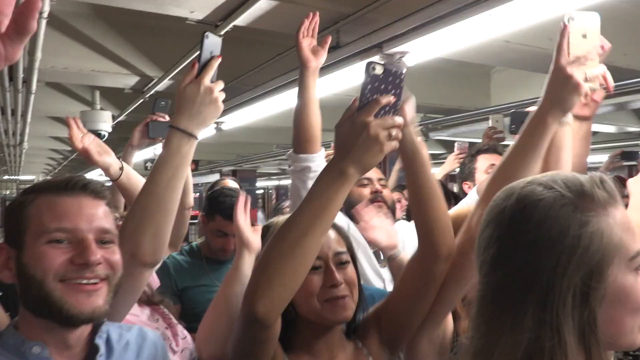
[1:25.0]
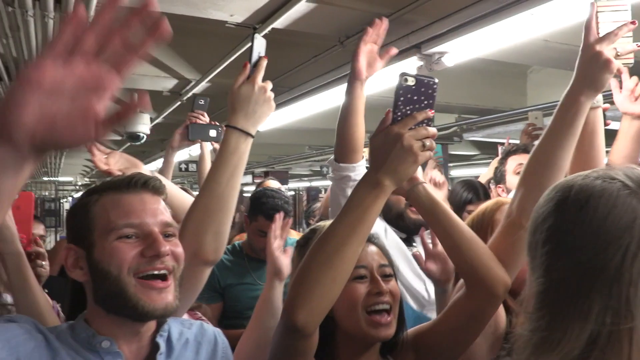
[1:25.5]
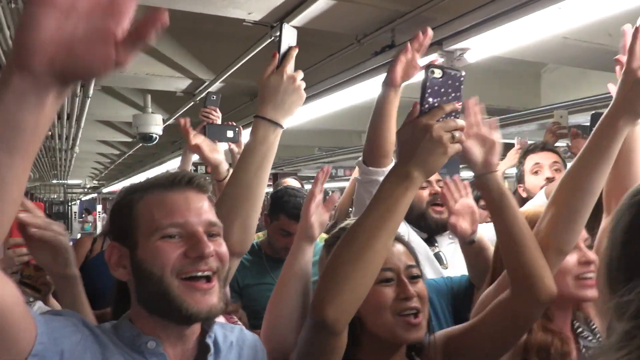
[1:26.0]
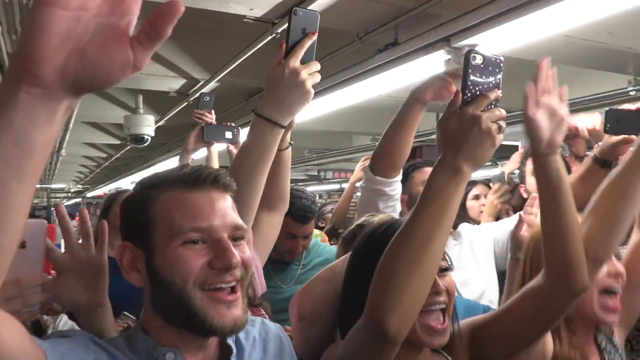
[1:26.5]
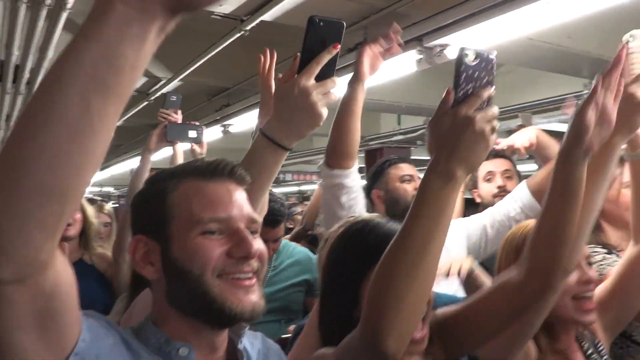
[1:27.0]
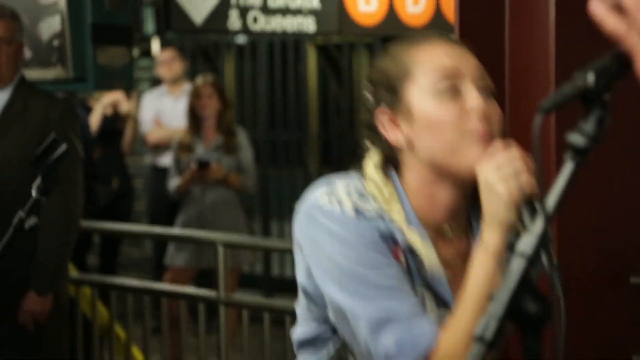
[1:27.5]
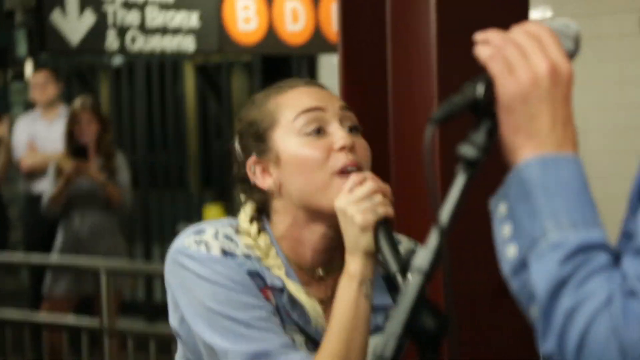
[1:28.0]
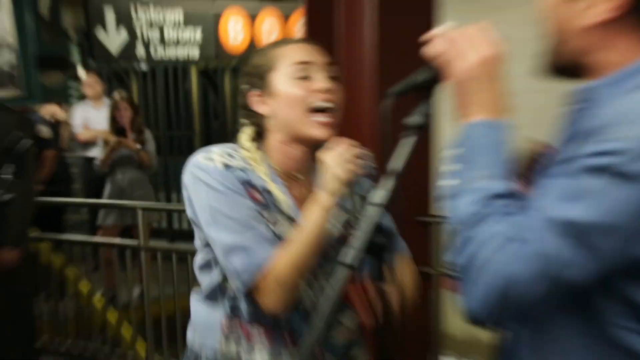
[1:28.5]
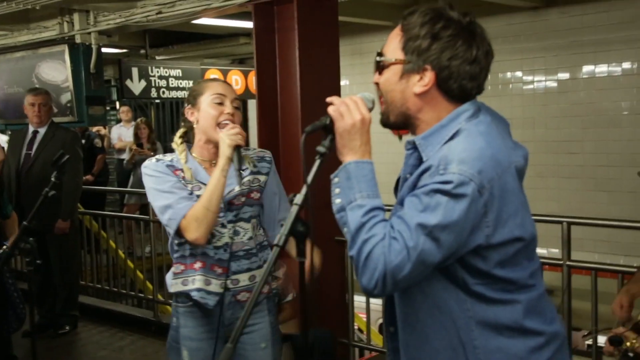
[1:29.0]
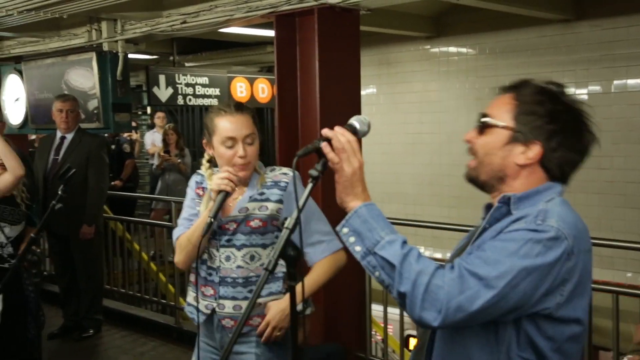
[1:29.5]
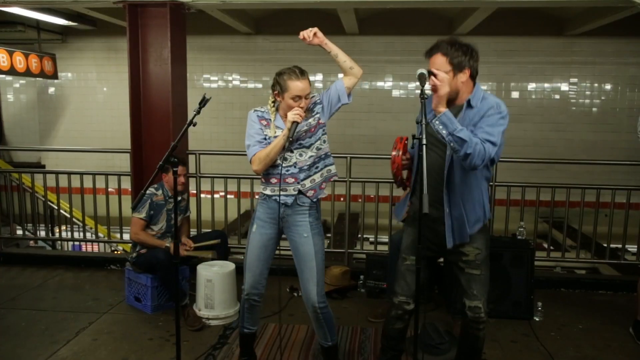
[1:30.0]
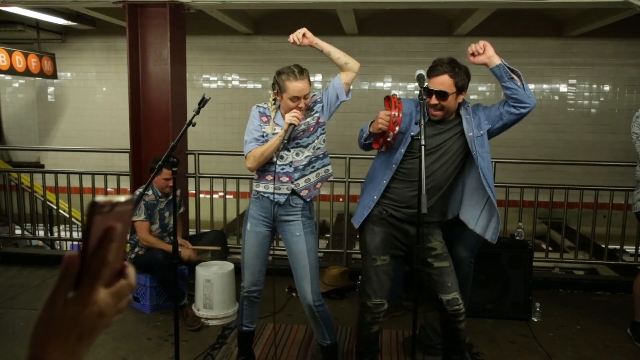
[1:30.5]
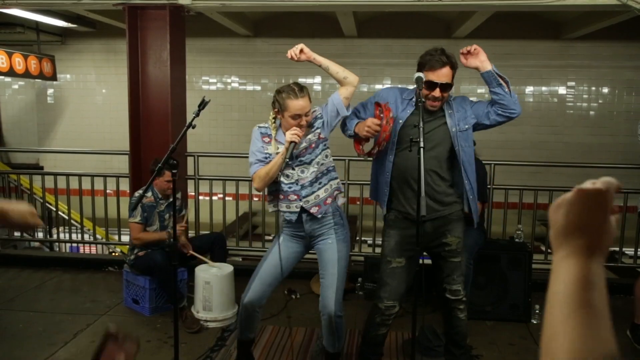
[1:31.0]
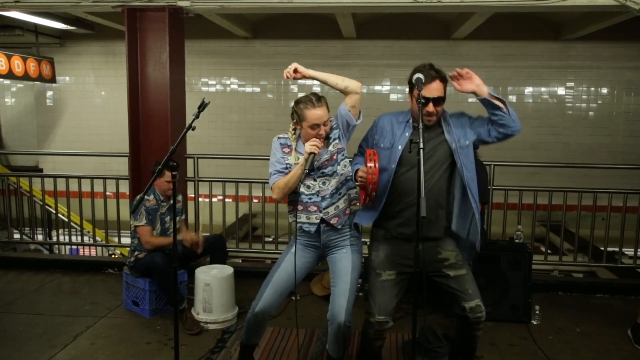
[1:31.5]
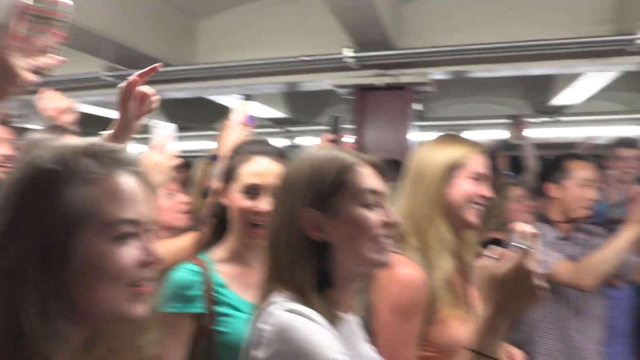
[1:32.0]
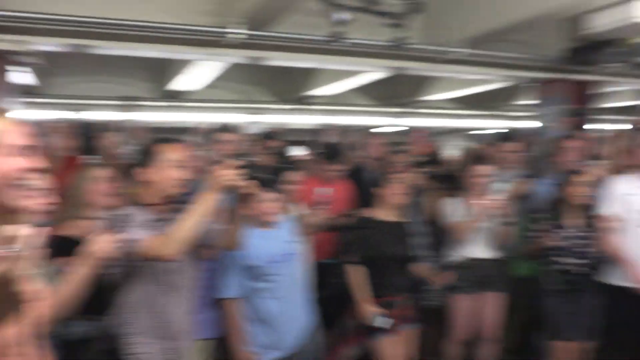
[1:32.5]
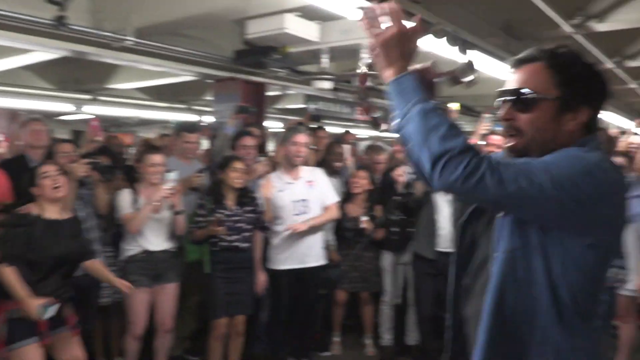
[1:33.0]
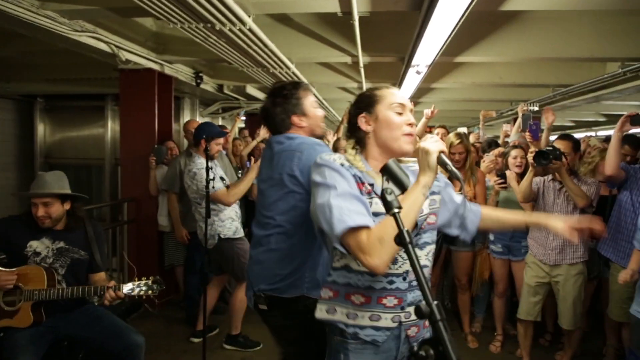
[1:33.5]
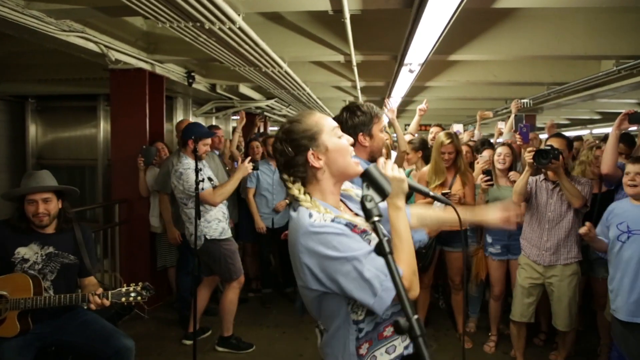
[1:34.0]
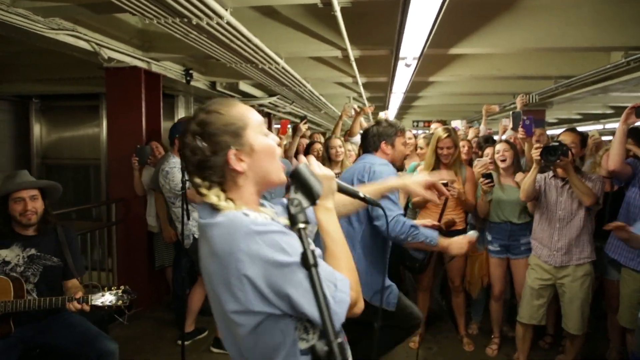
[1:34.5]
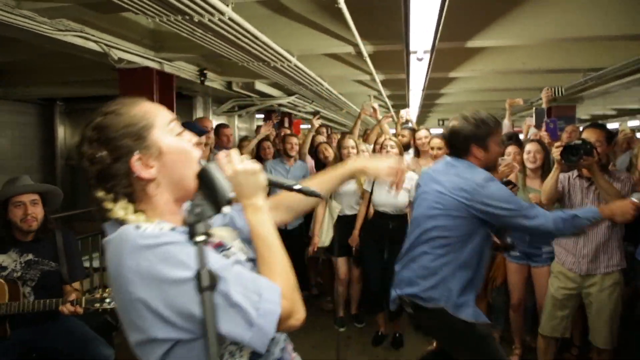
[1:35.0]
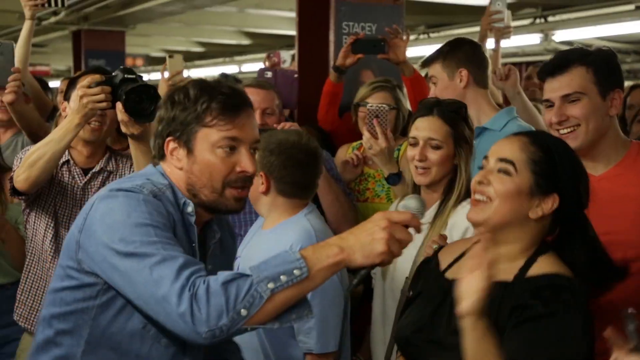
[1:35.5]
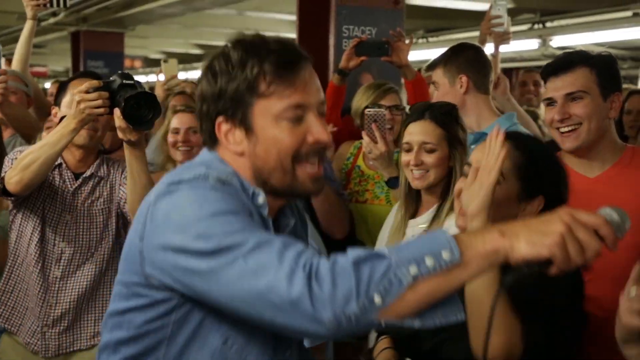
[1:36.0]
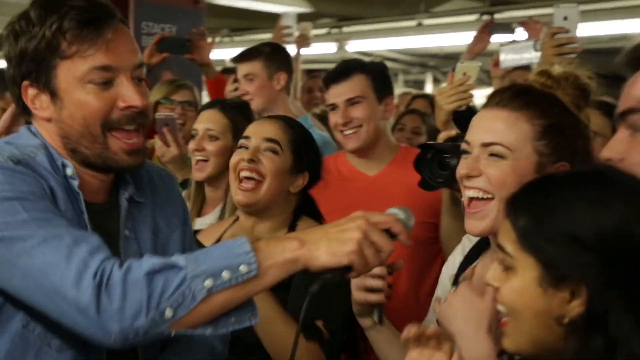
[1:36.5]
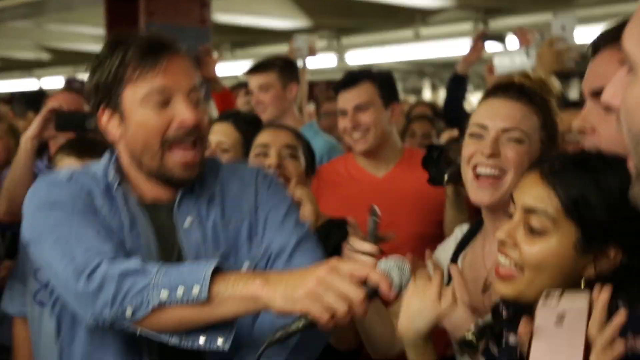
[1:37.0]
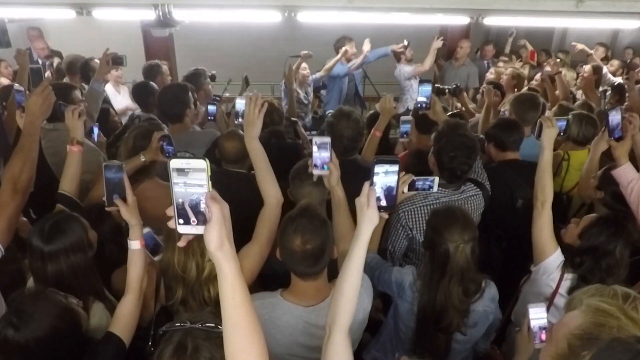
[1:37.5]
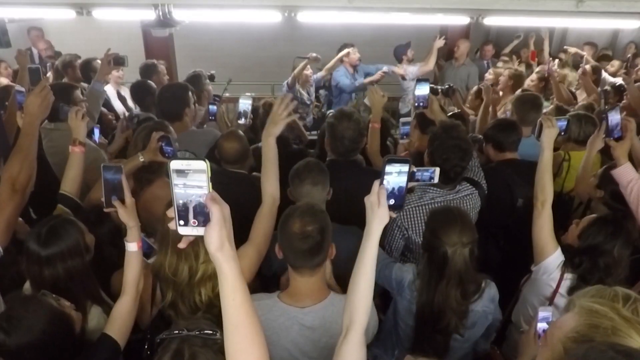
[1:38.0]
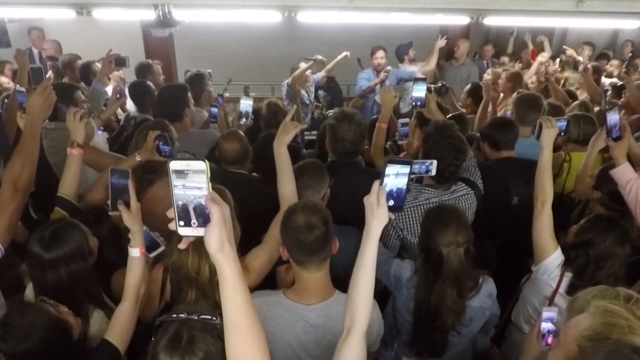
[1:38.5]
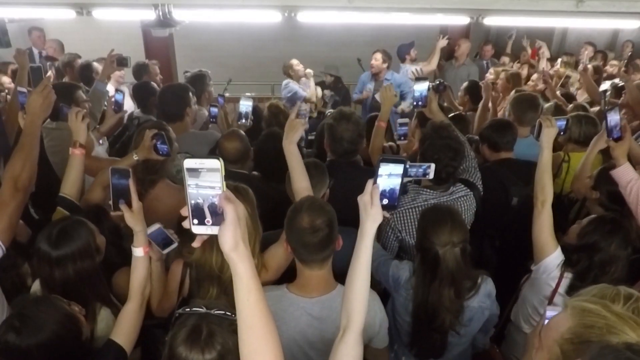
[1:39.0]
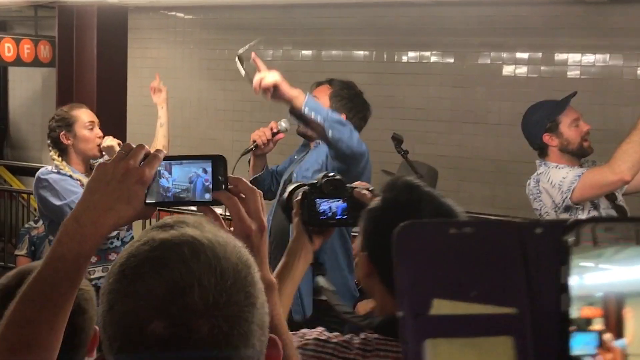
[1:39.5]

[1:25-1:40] In the subway, the crowd has their hands up, shaking them around. The video cuts to Miley and Jimmy dressed the same way, except that she has taken off her hat and the black hair, showing her normal blonde hair, braided down the center into big braids coming over the front of her shoulders. She holds the microphone and sings at Jimmy, and they bang hips together while singing. In the background are the man playing the bucket, the man still playing the guitar, and more people gathering. The video cuts to the crowd, panning from left to right in an almost circular motion as they sing and chant with their phones up. A man holds up a microphone boom. Jimmy's microphone is still on the stand. The crowd is probably 85% women. The ceiling is pretty low and grayish, with big, long, bright white lights. Jimmy goes in front of the crowd and holds out the microphone for them to sing along, then goes back to Miley and they sing together. Jimmy has lost his cowboy hat and sunglasses. The people look to be having fun while recording everything.